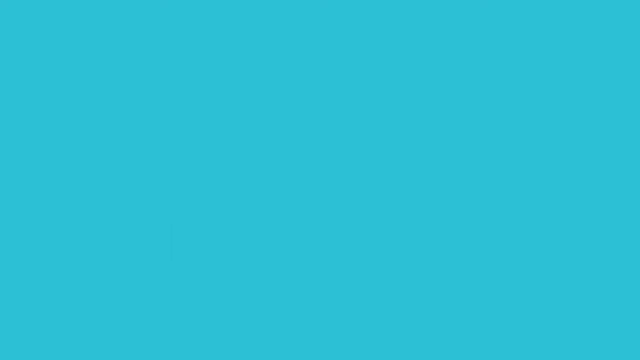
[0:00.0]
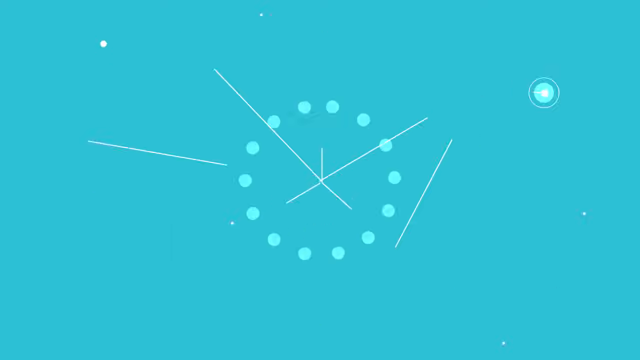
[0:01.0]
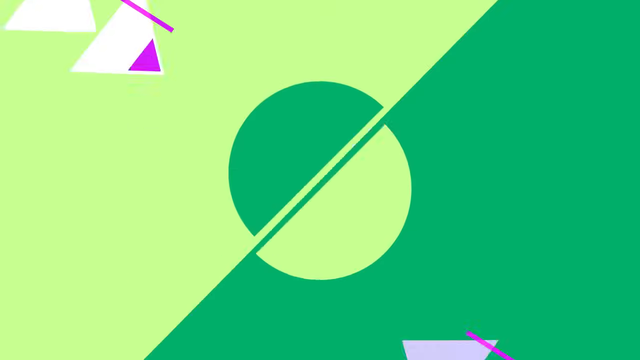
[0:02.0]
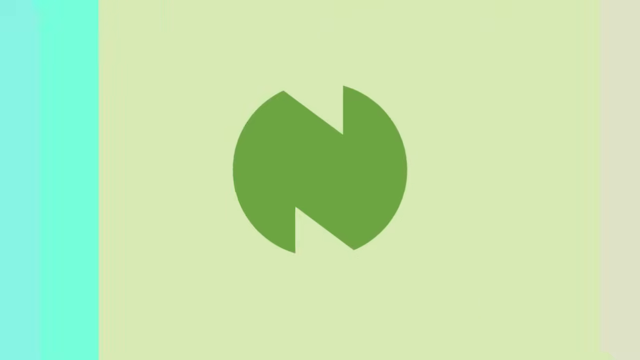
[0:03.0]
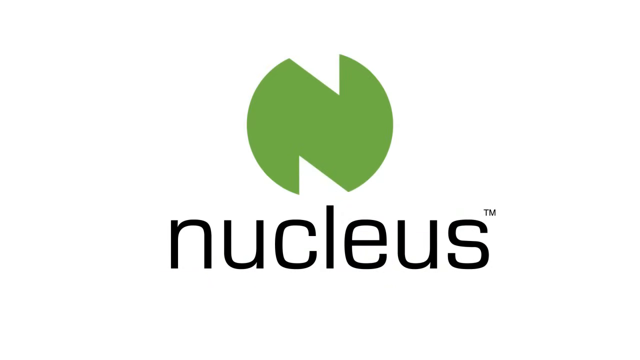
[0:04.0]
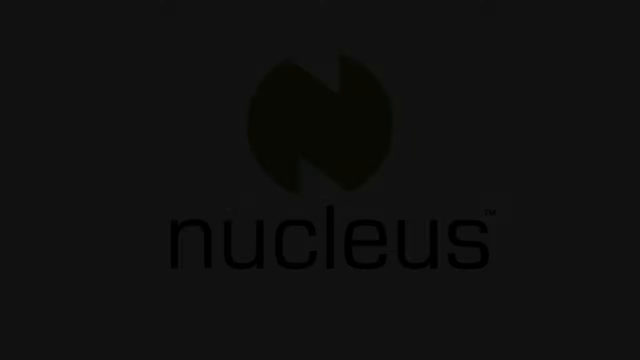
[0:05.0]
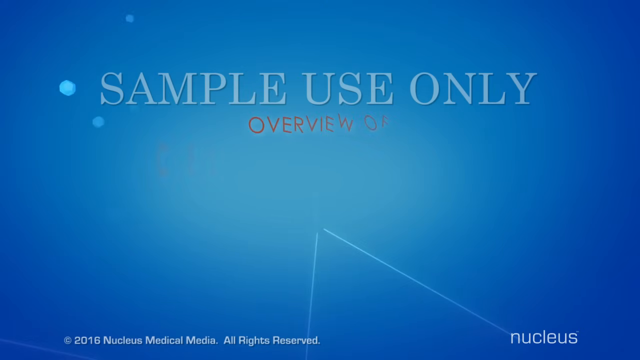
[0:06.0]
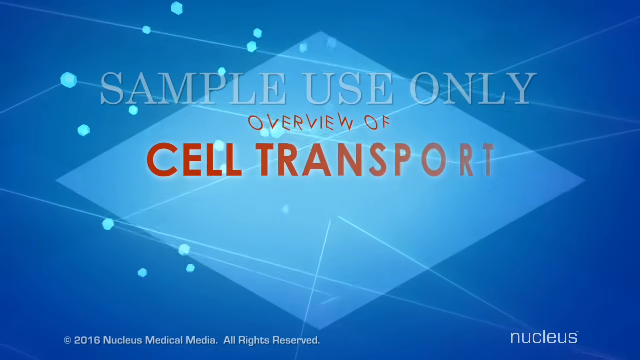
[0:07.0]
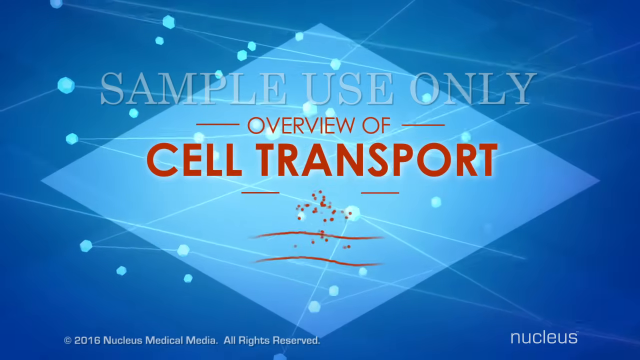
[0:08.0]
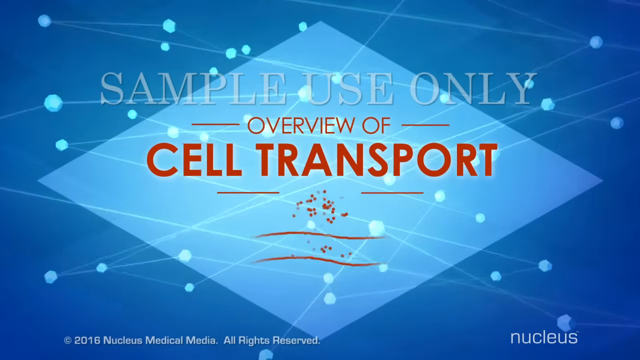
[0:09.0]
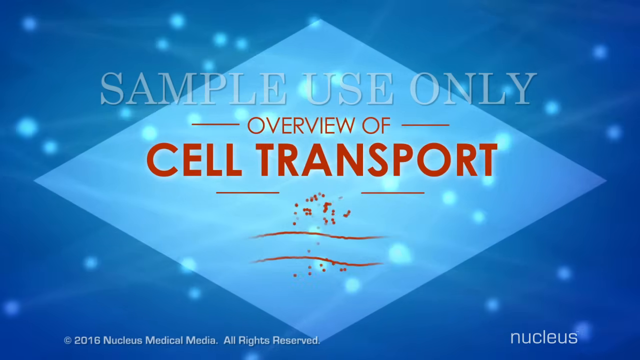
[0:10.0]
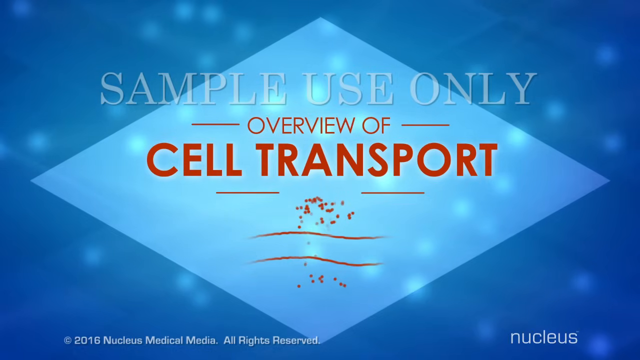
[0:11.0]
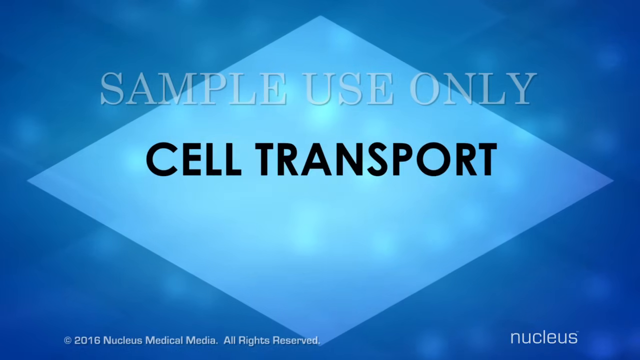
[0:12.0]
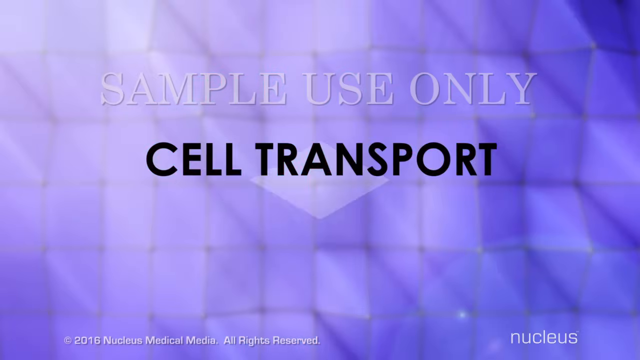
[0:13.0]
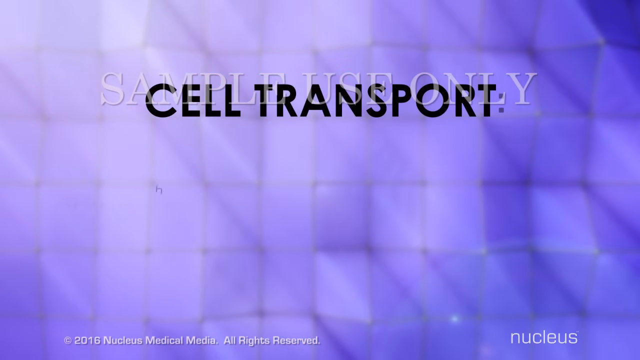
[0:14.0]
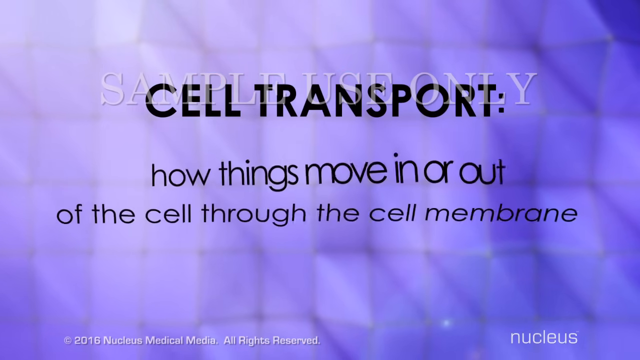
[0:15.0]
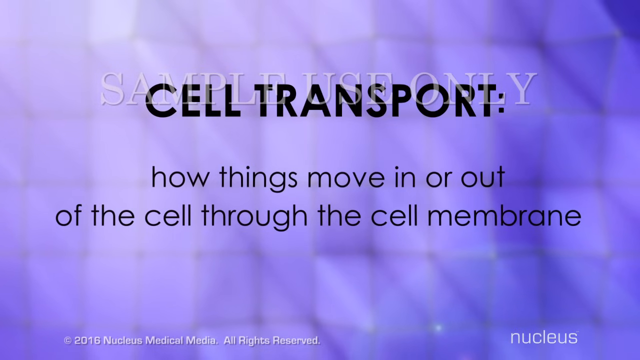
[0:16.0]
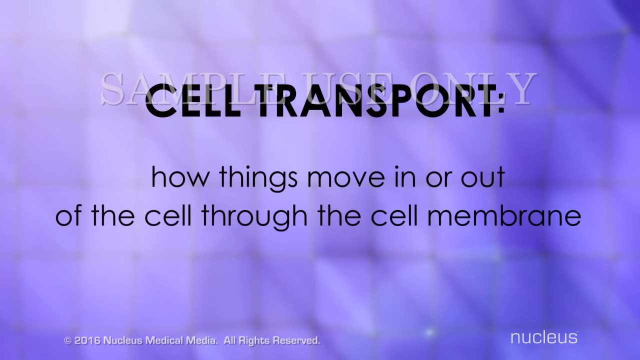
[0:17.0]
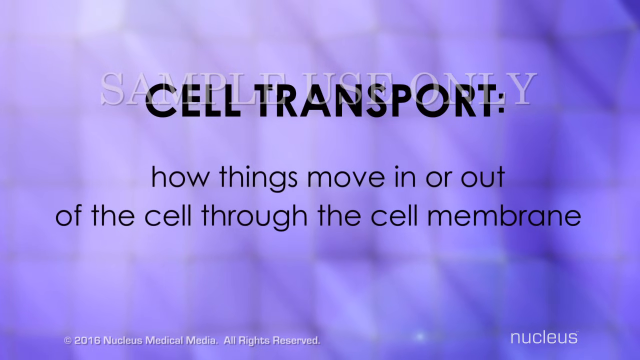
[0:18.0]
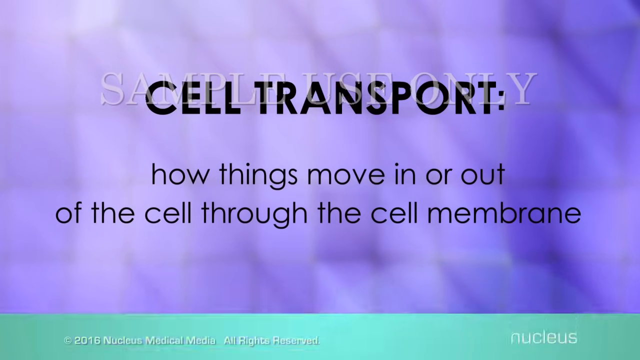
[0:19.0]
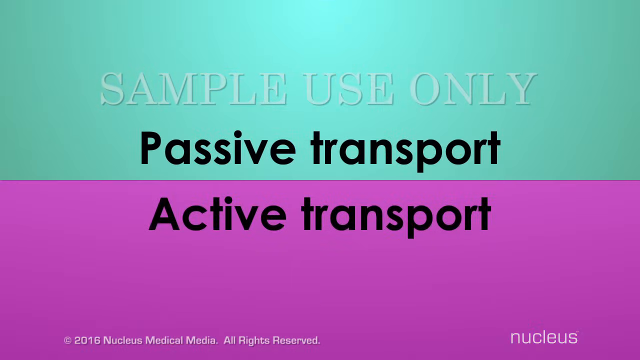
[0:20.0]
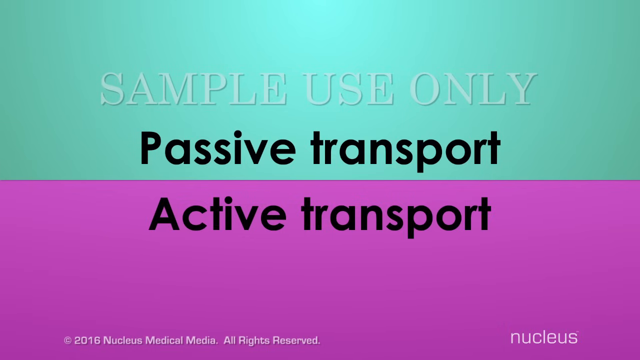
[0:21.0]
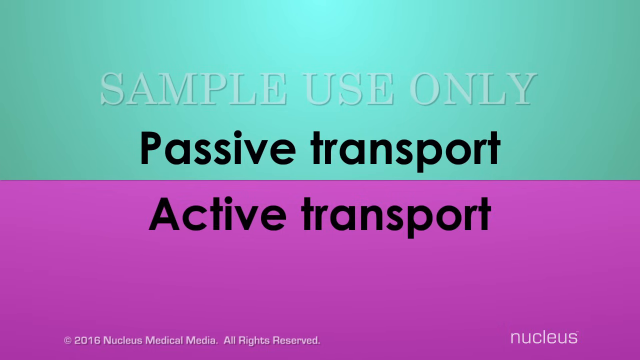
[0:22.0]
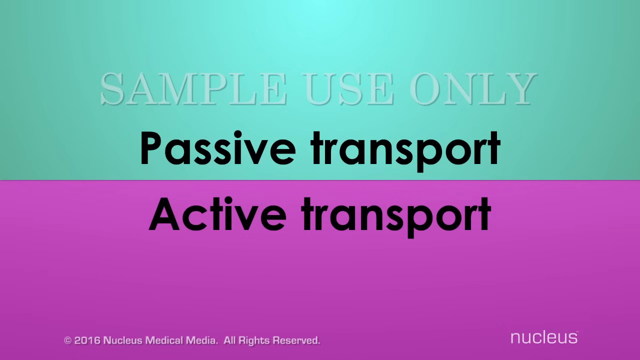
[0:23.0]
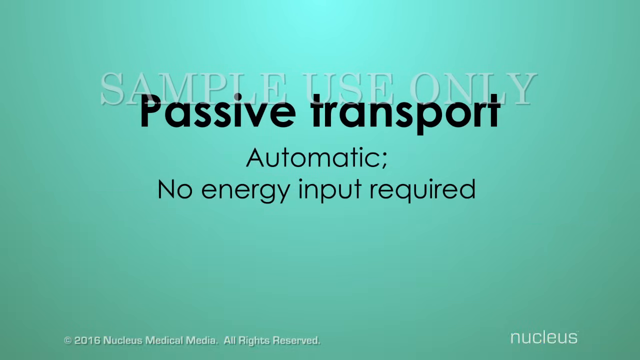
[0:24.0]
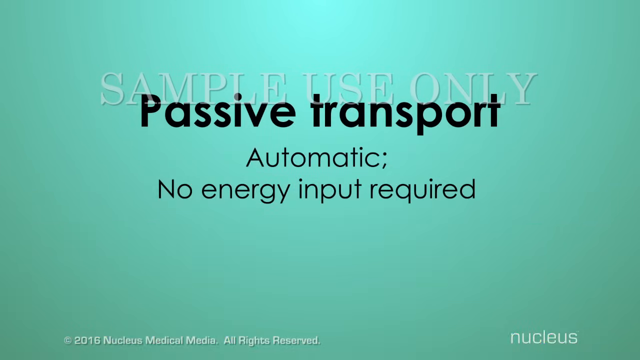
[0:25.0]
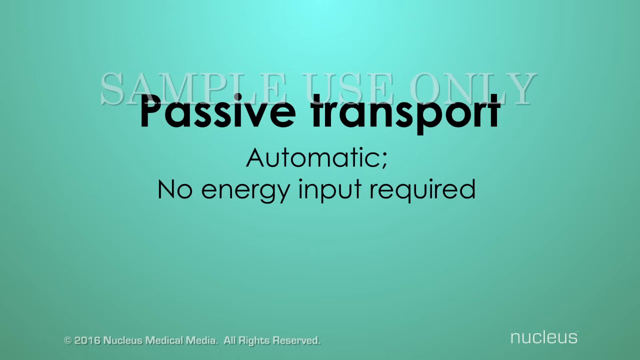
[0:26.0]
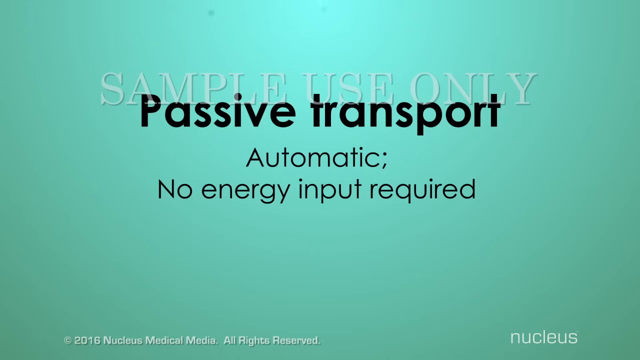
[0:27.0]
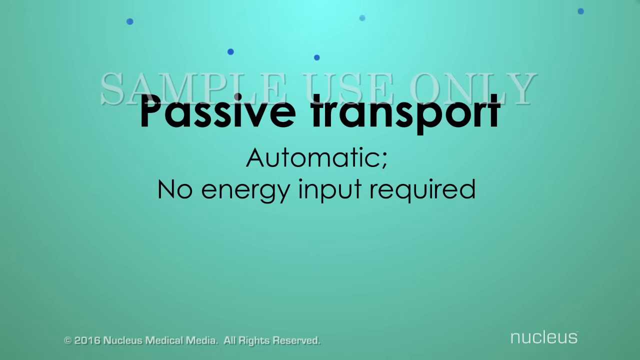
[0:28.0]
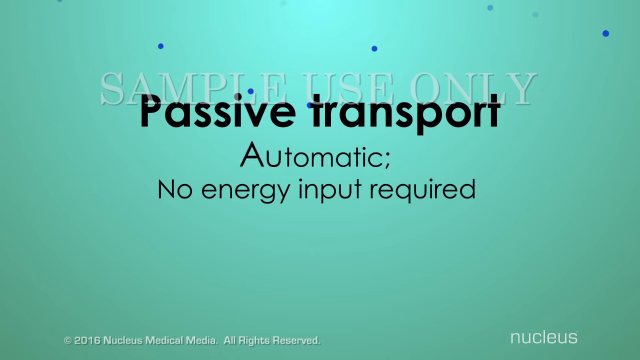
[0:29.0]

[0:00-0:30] The video comes from Nucleus, whose logo is green and looks basically like a fat N. It is a sample use only video about an overview of cell transport. The words "cell transport" are in red, and the design element is a blue background with glowing dots on it. The first card reads "cell transport" and says "how things move in and out of the cell membrane." The background then changes from blue to purple with a very faded, grid-like appearance, and the text on screen is black. The screen switches to two types of cell transport: passive transport at the top, with a teal background, and active transport at the bottom, with a purple background. Text reads "passive transport, automatic, no energy input required." Falling blue dots then show up on the background.